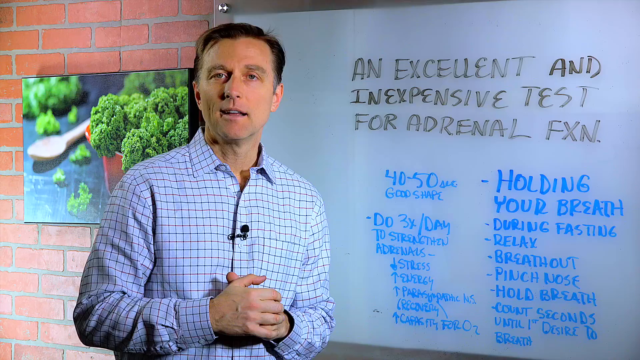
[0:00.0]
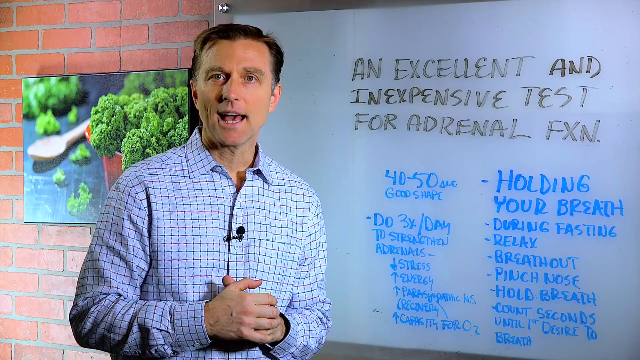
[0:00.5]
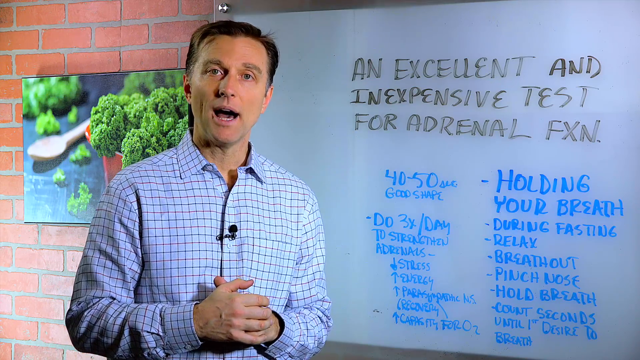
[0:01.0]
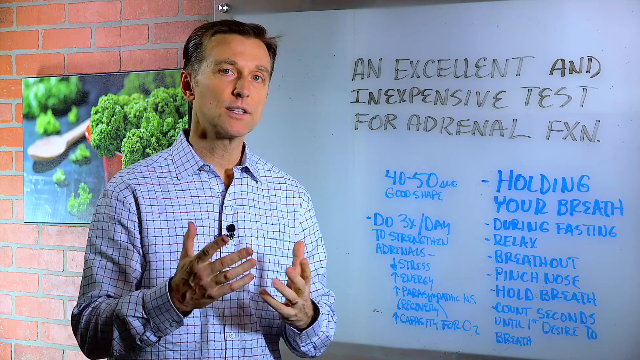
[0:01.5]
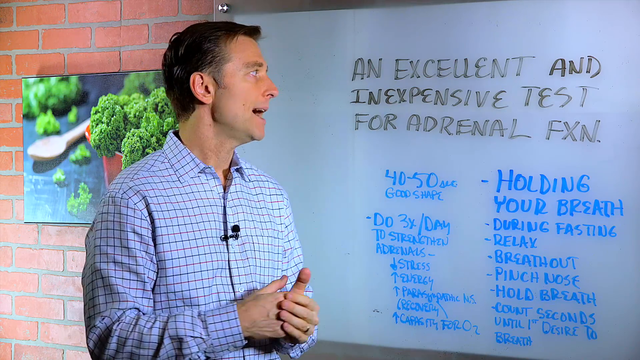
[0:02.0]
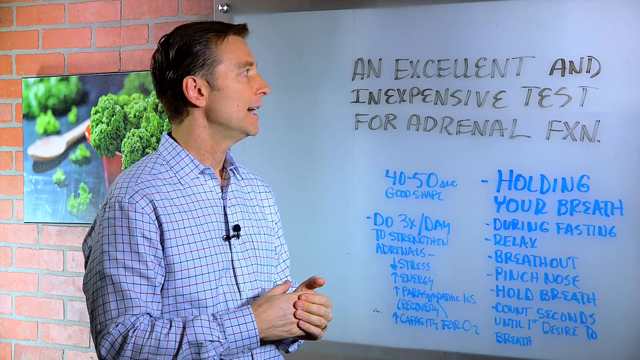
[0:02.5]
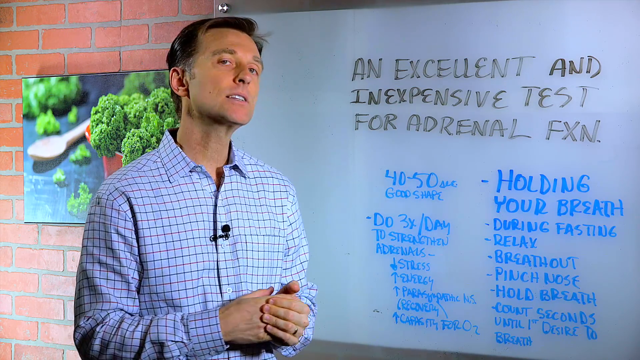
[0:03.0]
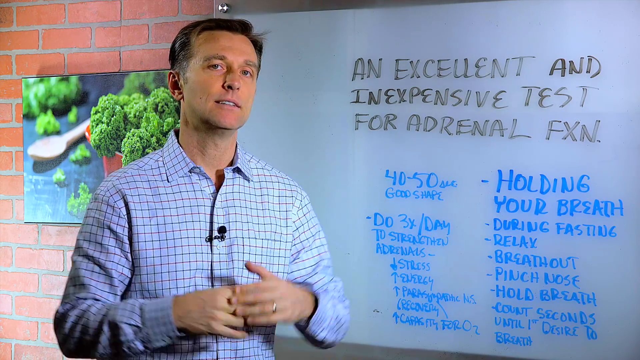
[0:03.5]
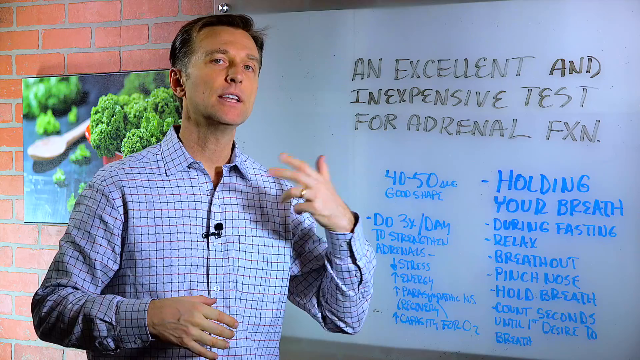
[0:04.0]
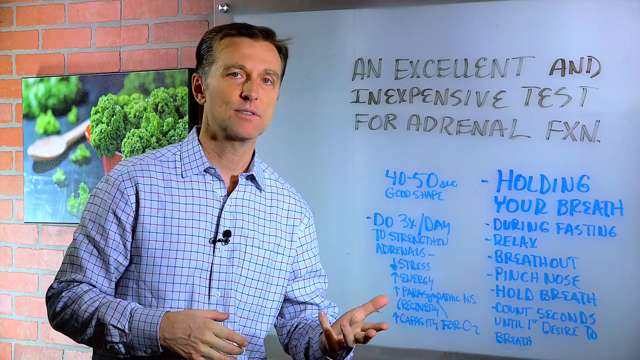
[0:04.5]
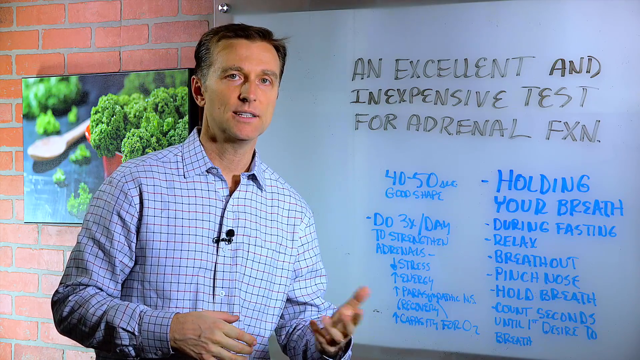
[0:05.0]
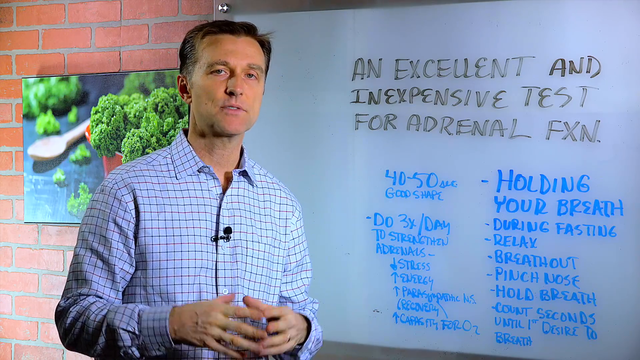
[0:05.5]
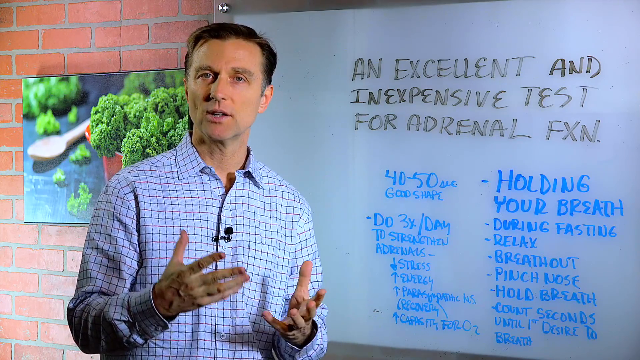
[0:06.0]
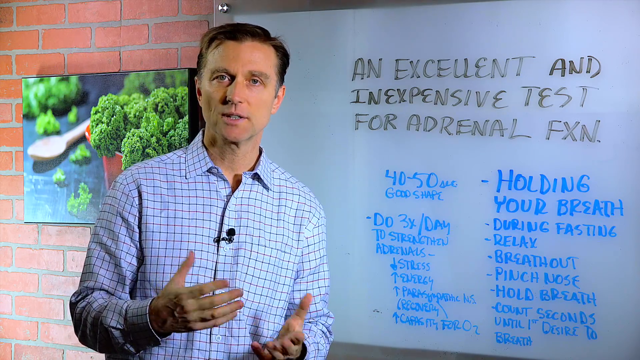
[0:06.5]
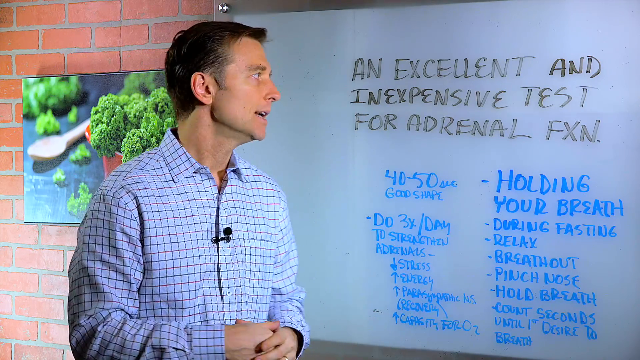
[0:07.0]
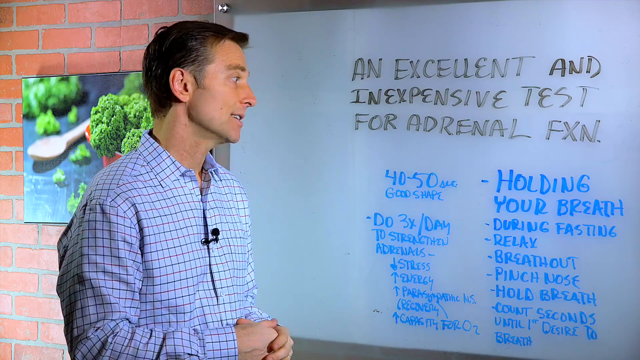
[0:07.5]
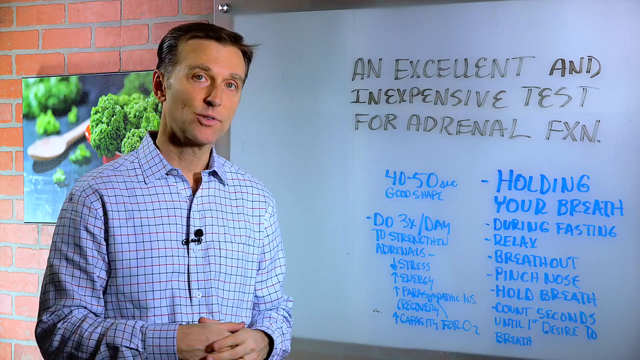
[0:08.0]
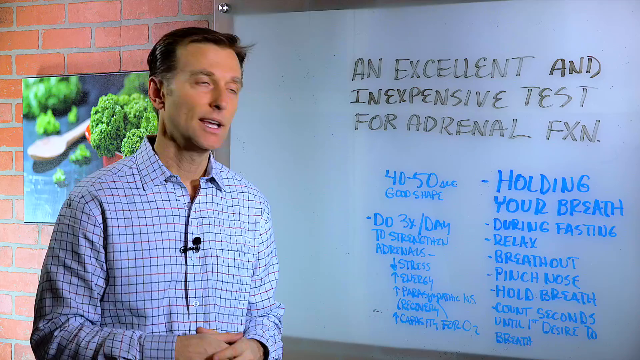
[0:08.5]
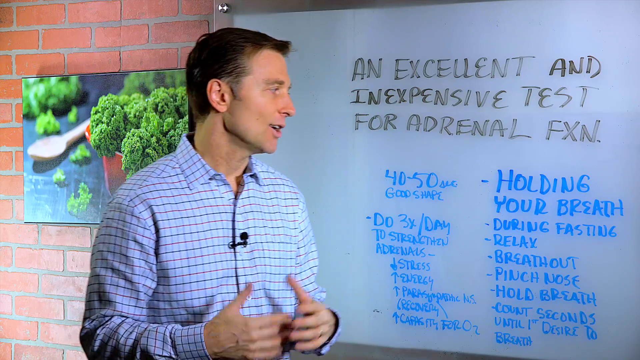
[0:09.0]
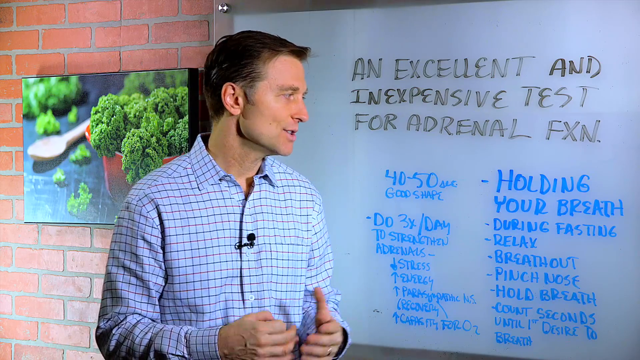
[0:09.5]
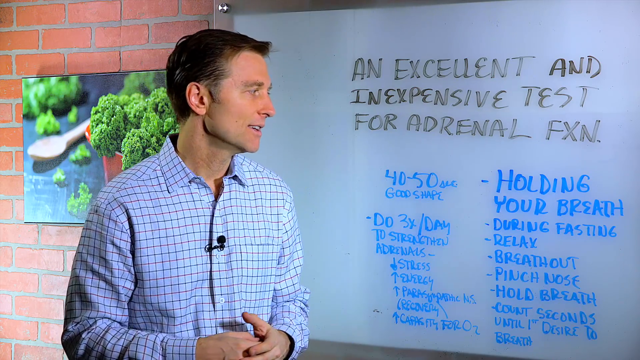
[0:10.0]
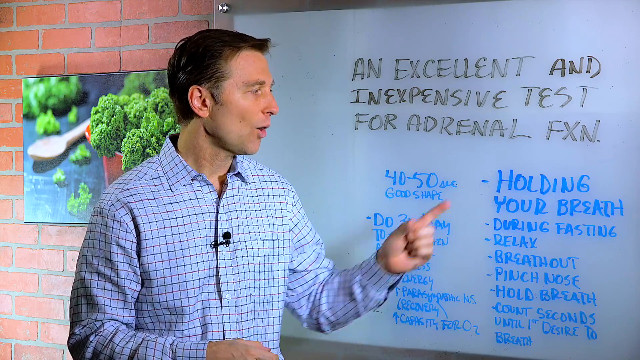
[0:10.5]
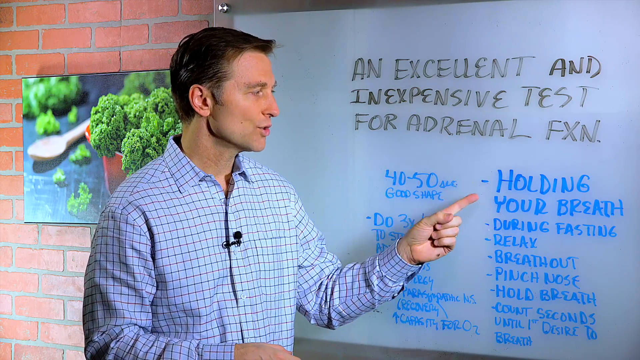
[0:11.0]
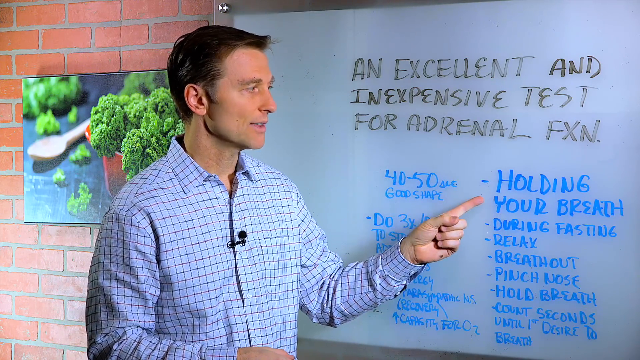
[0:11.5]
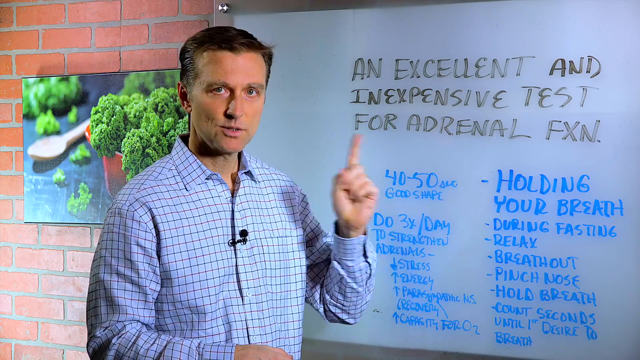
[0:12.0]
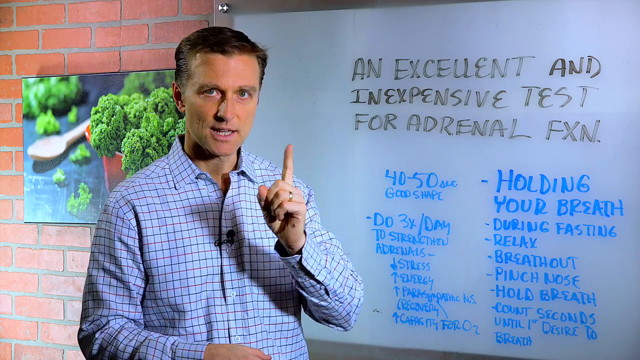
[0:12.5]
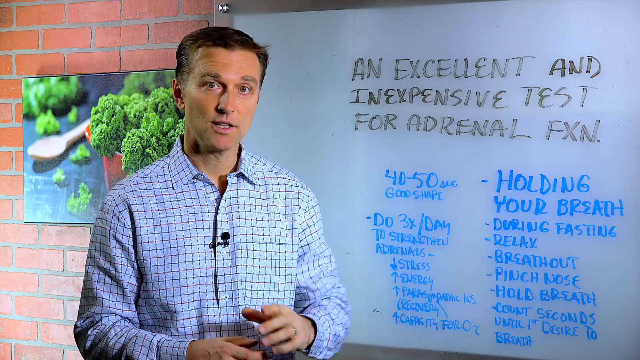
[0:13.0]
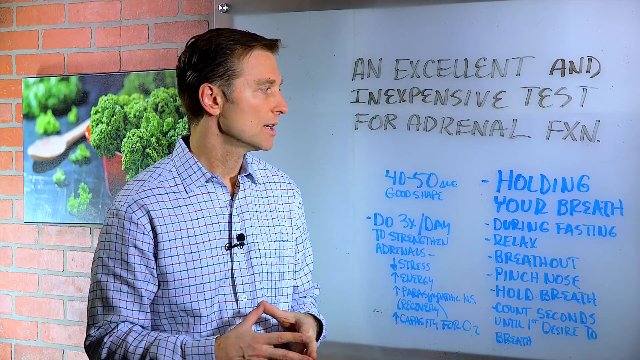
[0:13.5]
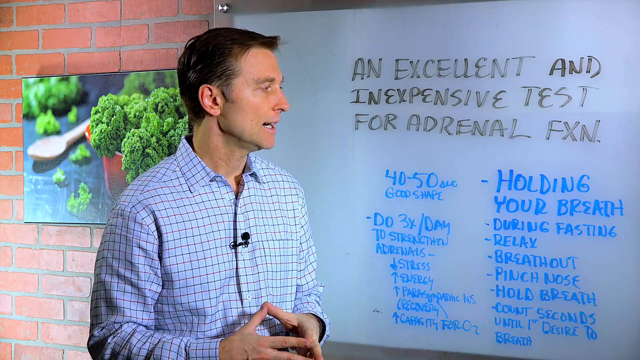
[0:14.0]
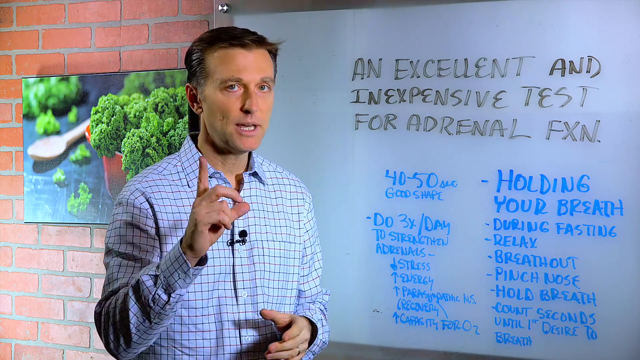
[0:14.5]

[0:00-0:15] A man in a blue checkered shirt, pale blue with darker lines, stands and talks while pointing to a whiteboard. Behind him is what looks like a video screen or a large chart displaying an image of some kale and a wooden spoon. As he talks he points to the text and information written on the whiteboard. Written in black at the top of the whiteboard is "an excellent and inexpensive test for adrenaline"; the rest of the text is written in blue. He gestures with both hands and the fingers of both hands. A black microphone is clipped to the front of his shirt. In a blue column on the right side, at the top, the text reads "holding your breath, during fasting, relax, breathe out, pinch nose, hold breath", with more text below.